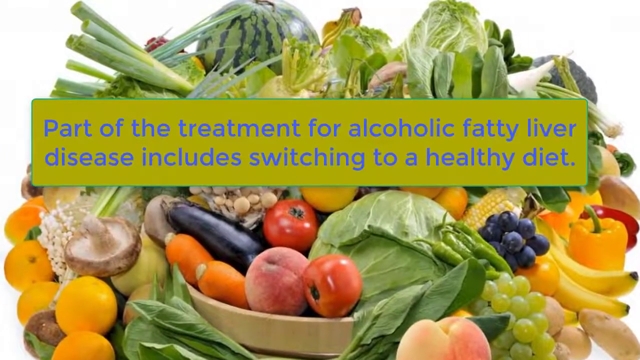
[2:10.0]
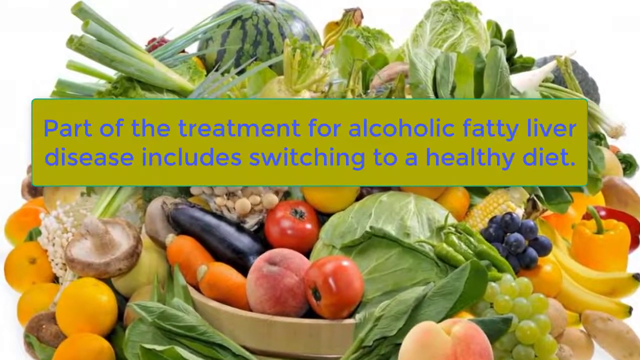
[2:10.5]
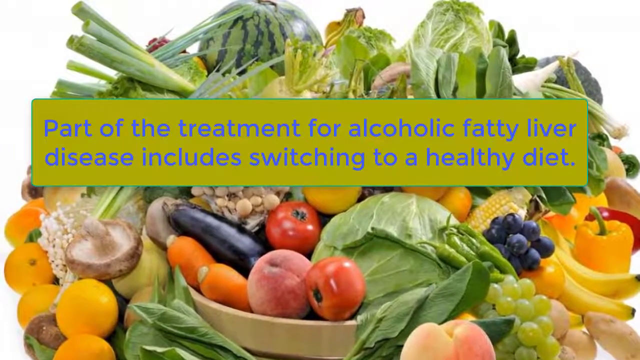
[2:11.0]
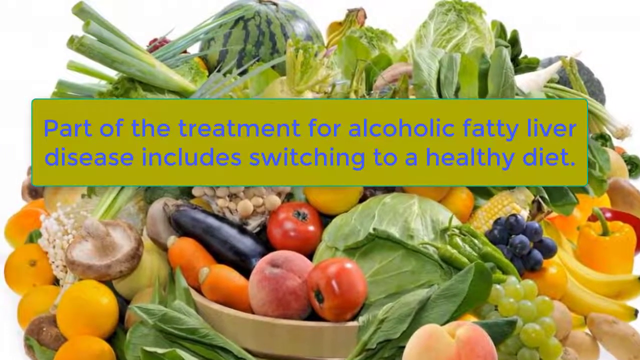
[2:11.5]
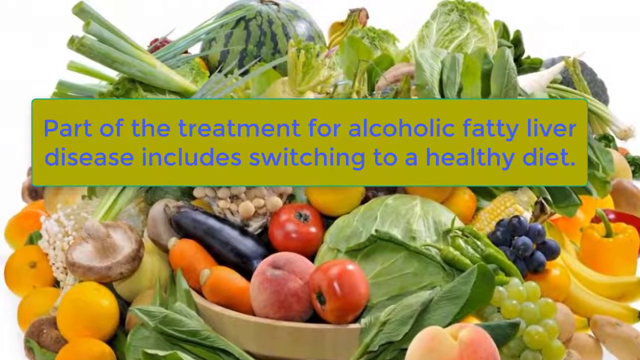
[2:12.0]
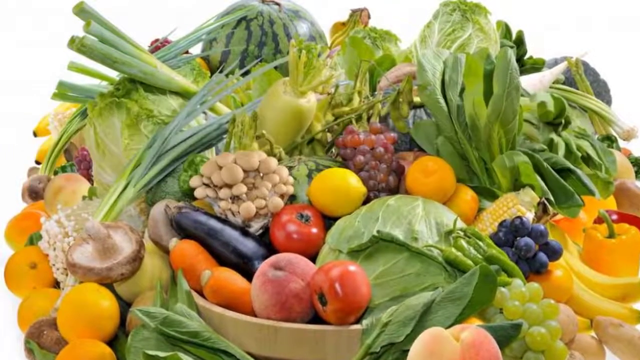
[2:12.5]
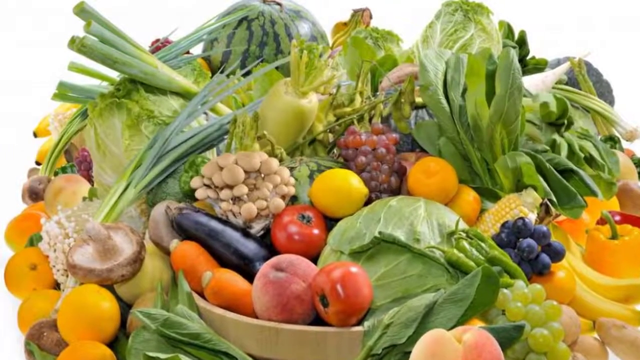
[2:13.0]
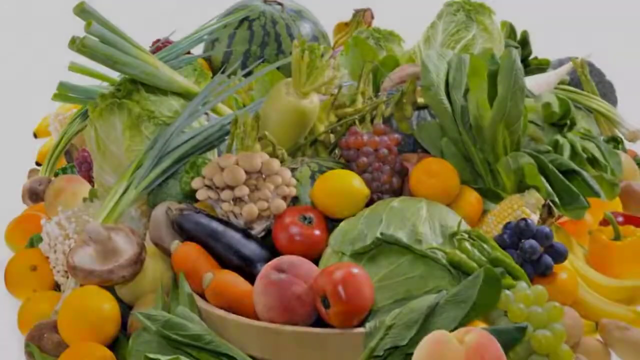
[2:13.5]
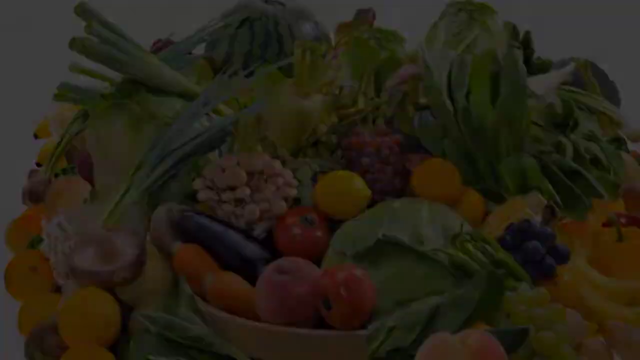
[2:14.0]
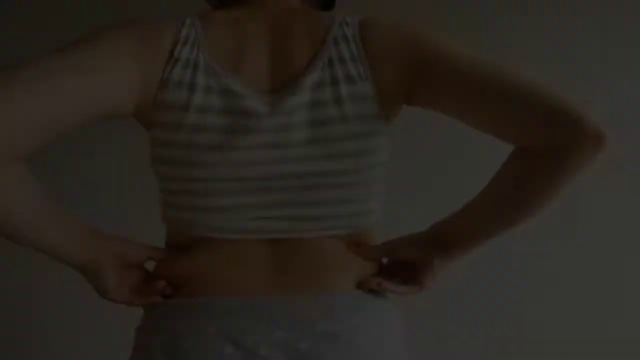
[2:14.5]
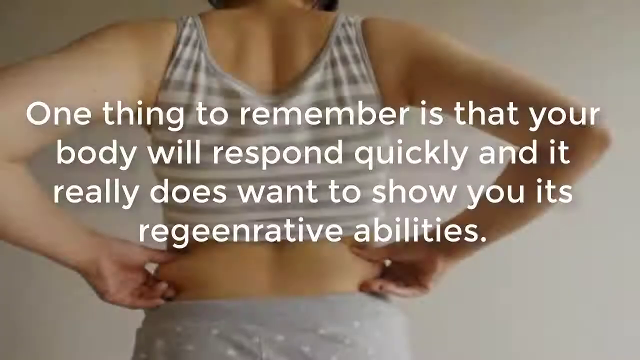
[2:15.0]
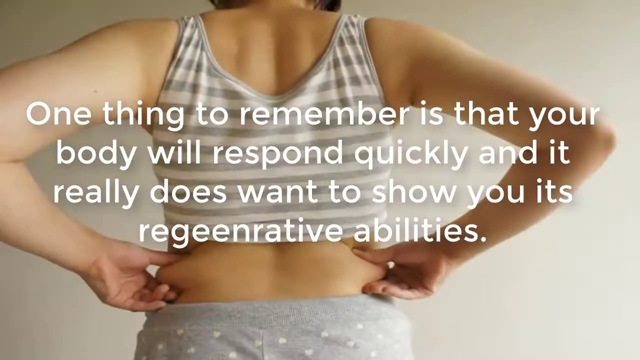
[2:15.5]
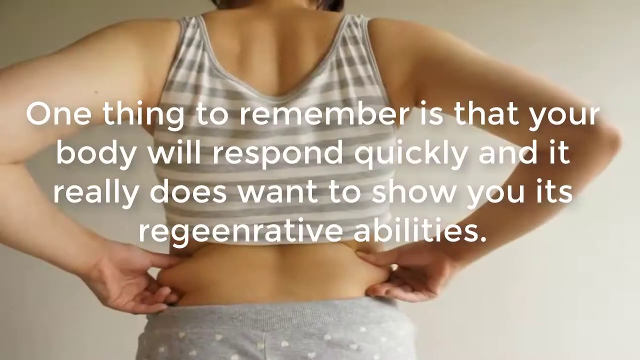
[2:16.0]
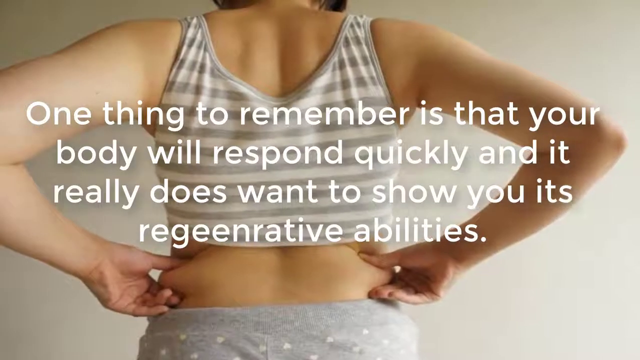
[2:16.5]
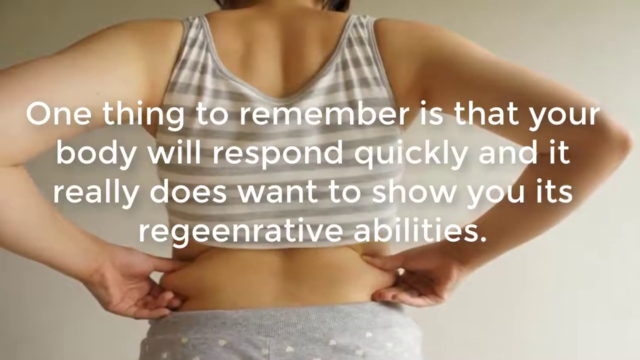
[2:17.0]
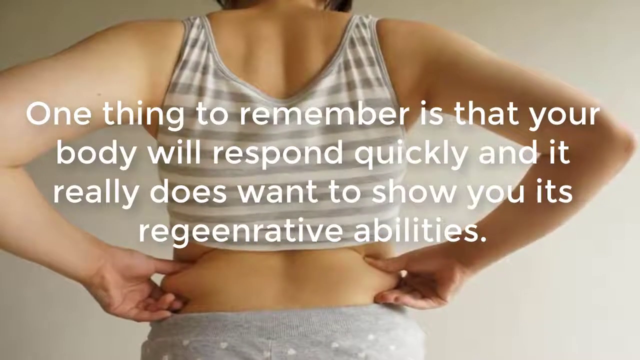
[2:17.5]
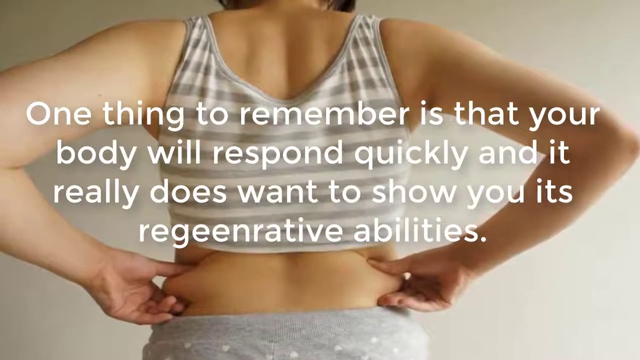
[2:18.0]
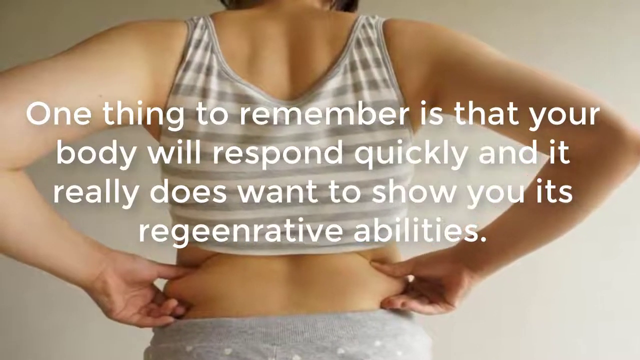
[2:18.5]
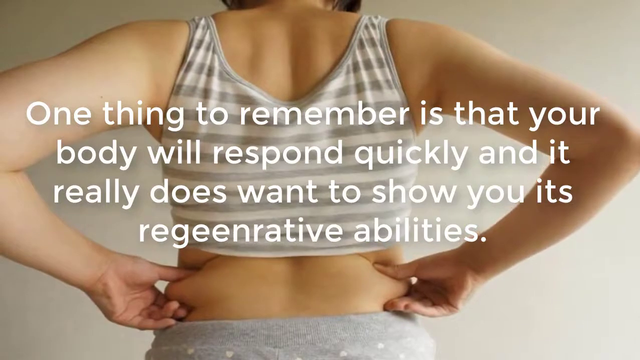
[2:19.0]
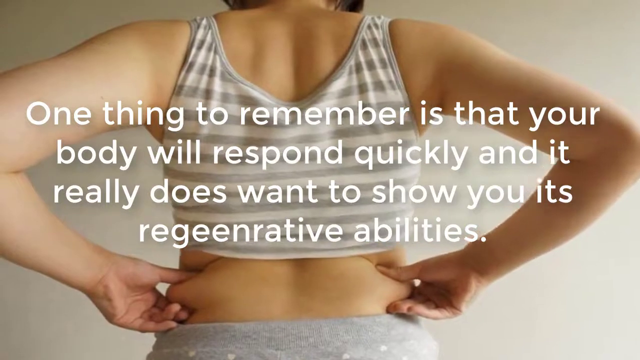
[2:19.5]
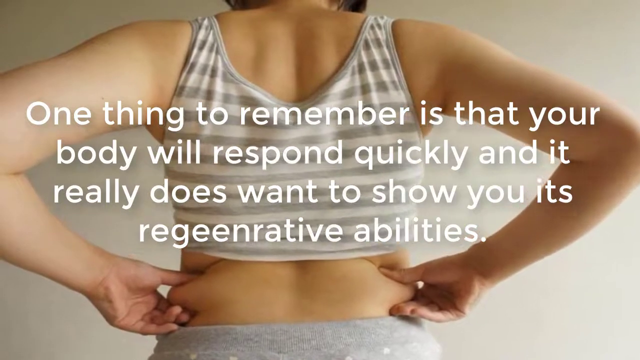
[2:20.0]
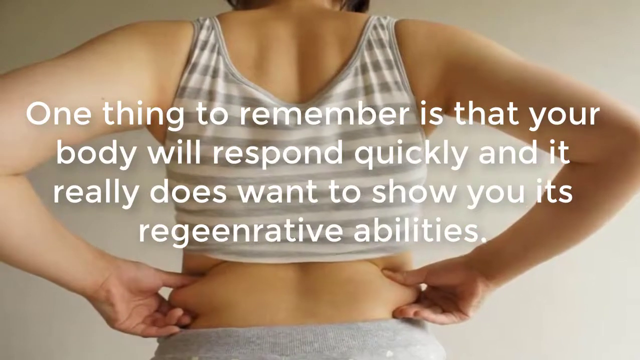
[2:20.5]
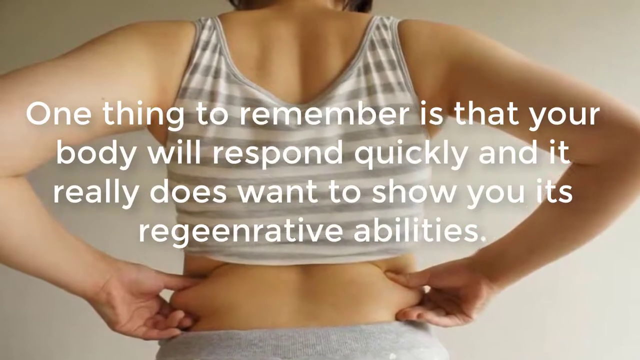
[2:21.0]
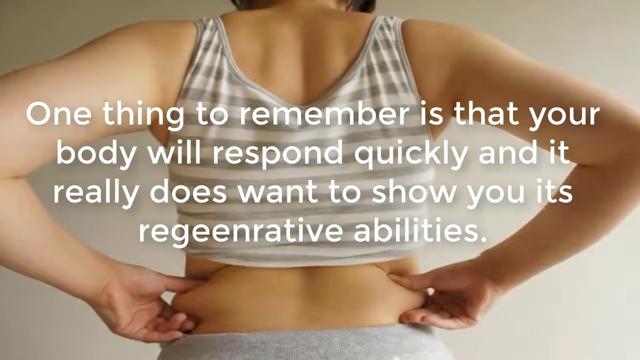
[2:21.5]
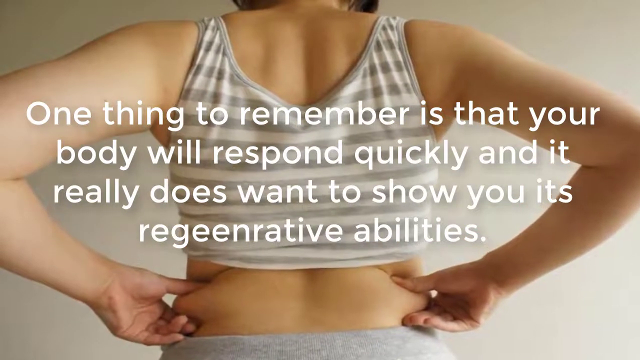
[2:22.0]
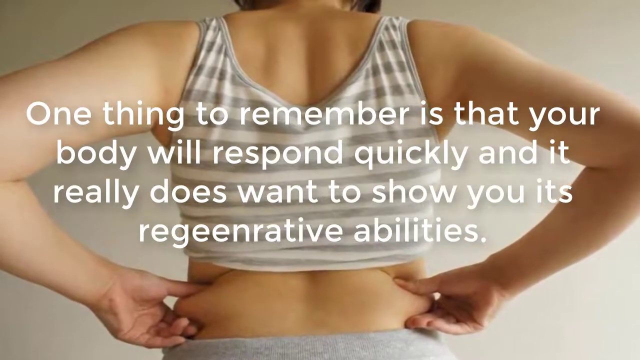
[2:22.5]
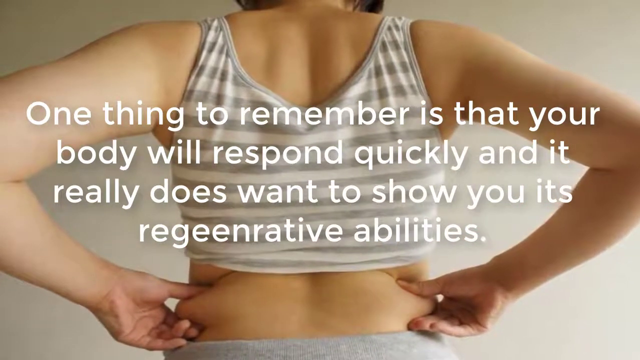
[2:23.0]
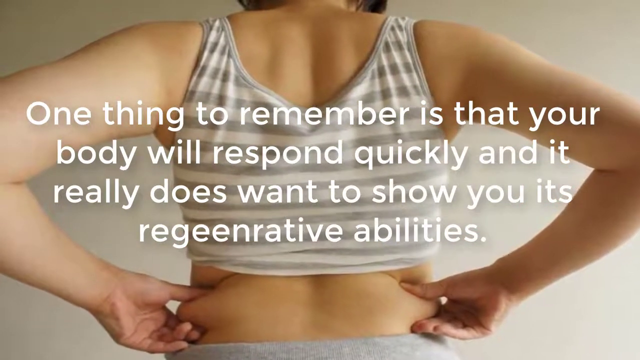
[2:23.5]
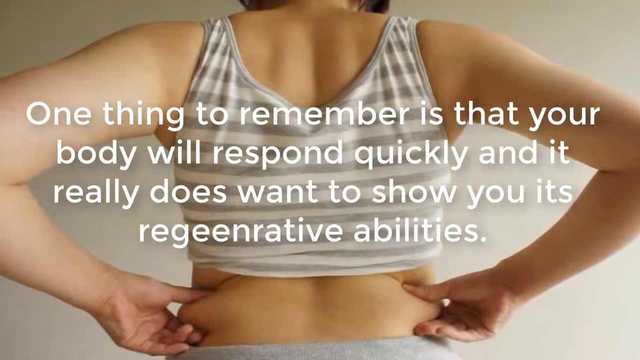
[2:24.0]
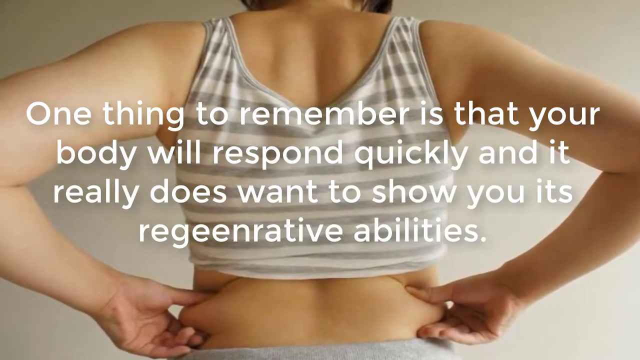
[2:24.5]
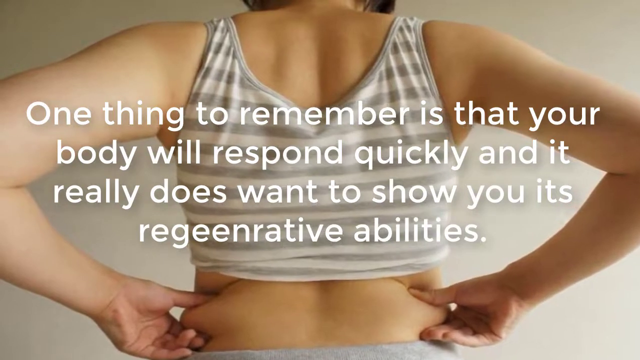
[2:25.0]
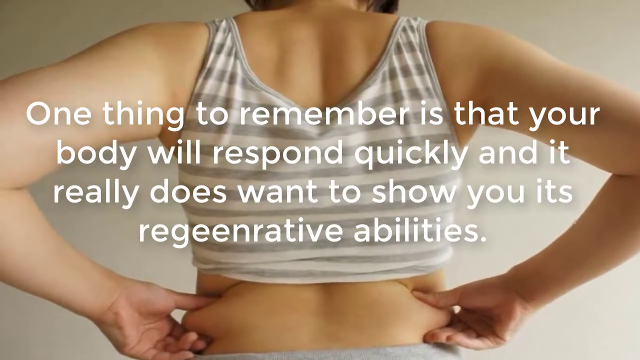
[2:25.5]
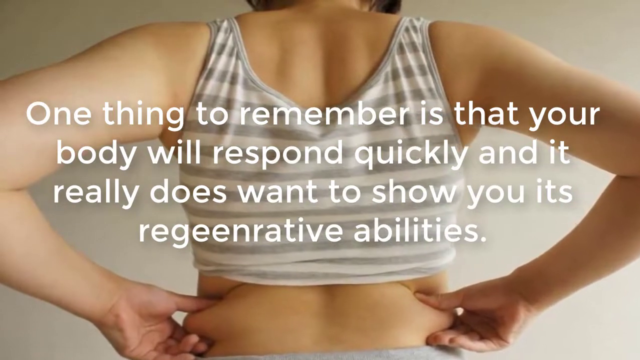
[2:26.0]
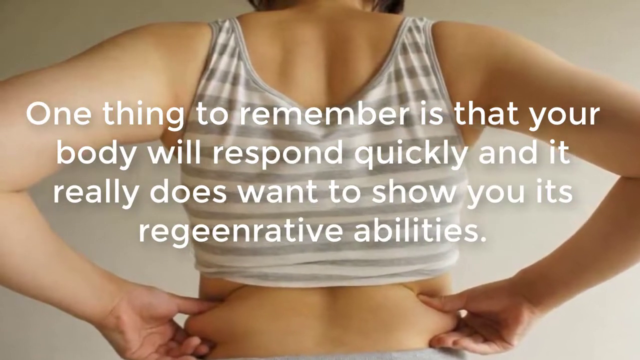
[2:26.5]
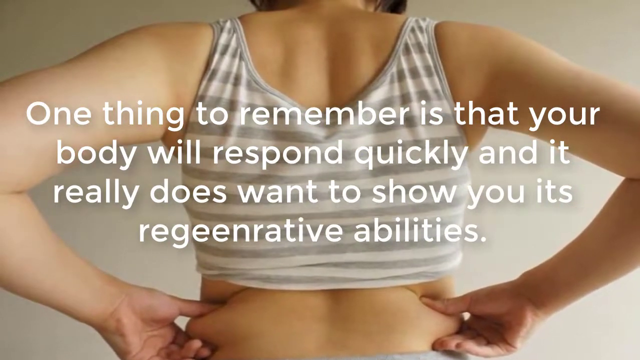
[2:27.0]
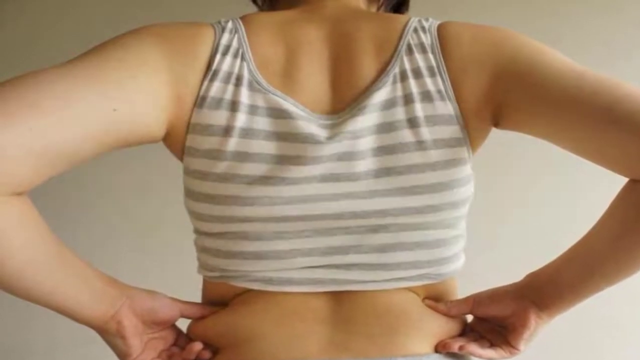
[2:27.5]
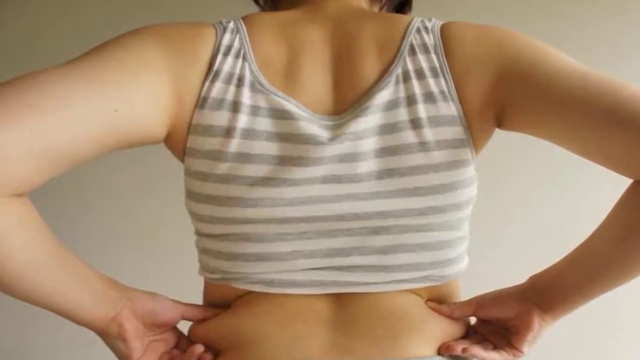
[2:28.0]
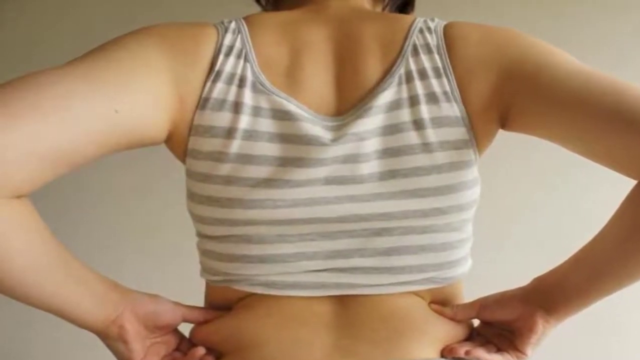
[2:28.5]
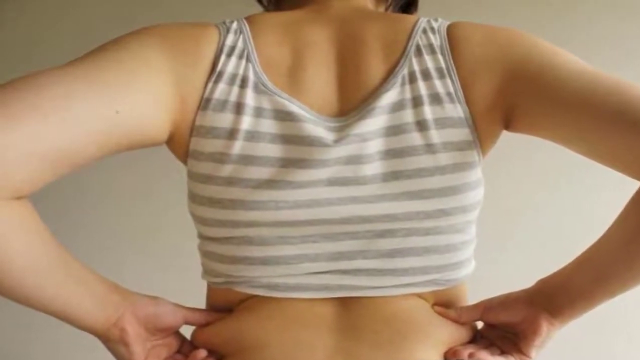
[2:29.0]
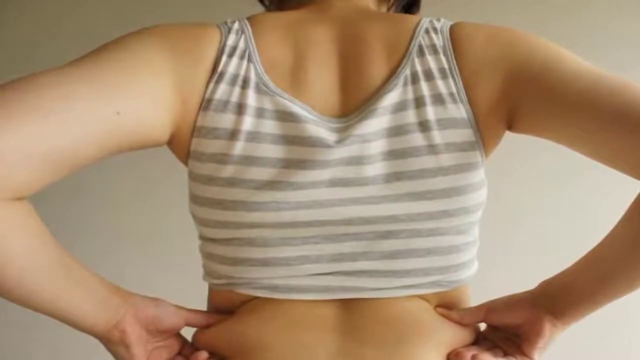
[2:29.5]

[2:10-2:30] The assortment of fruits and vegetables fills the entire screen, including eggplant, watermelon, mushrooms, grapes, corn and peppers. The next screen shows a woman in a tank top with her bare midriff exposed and the top of her pants visible. Her back is to the camera and her hands are on her waist, pinching the fat on either side between her fingers. White text in the center of the screen reads "One thing to remember is that your body will respond quickly and it really does want to show you its regenerative abilities." The view zooms in closer on her; her head is cut off by the top of the screen, so she is seen only from the shoulders down.